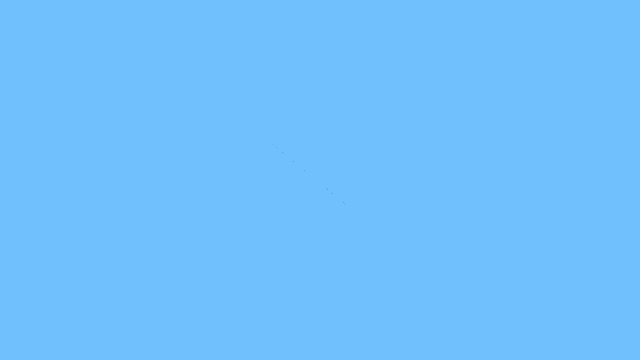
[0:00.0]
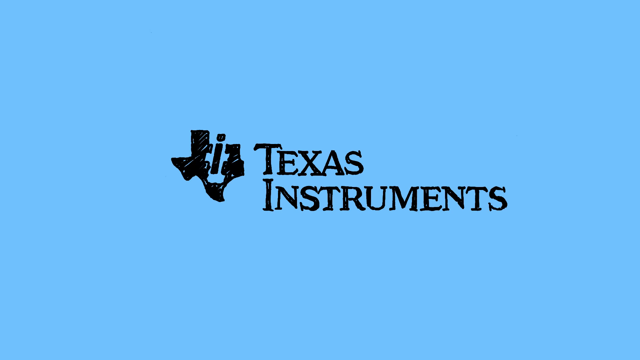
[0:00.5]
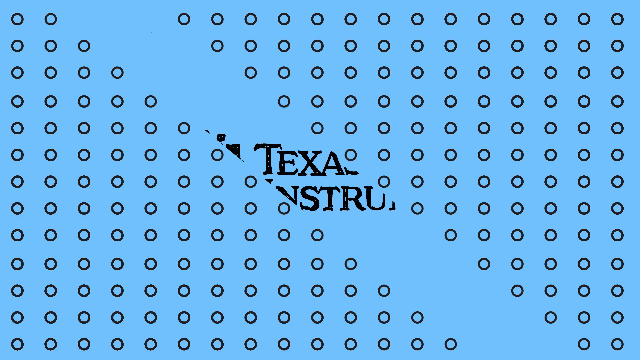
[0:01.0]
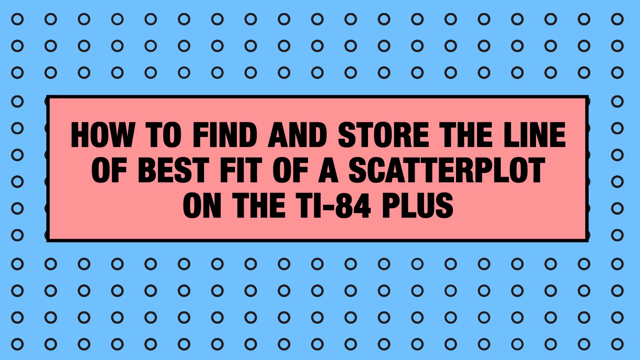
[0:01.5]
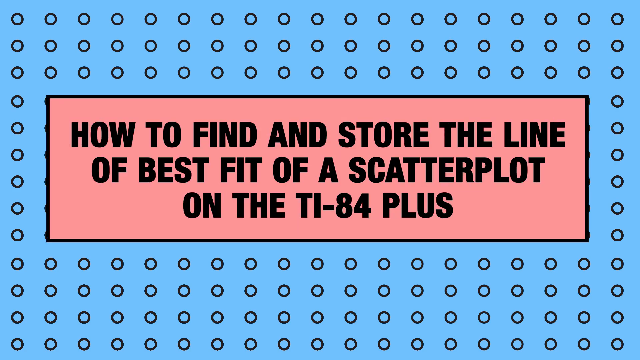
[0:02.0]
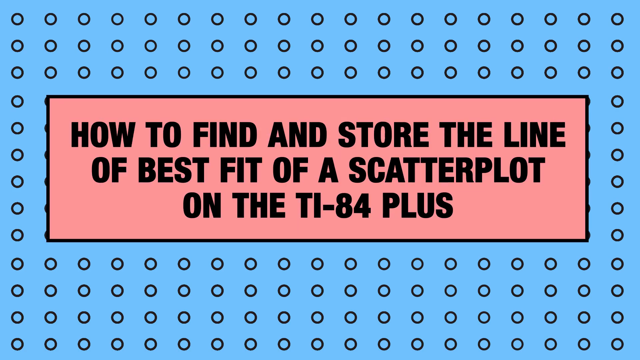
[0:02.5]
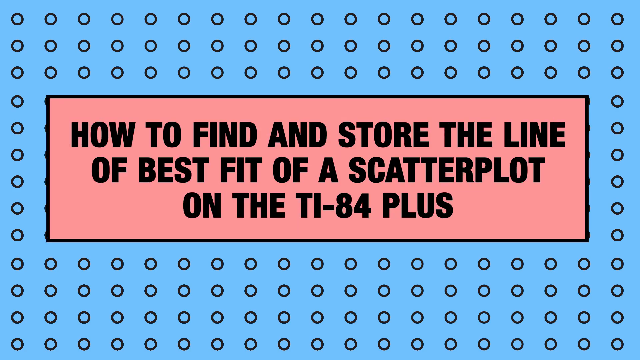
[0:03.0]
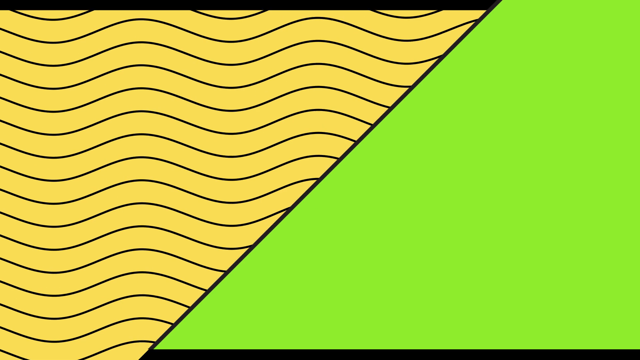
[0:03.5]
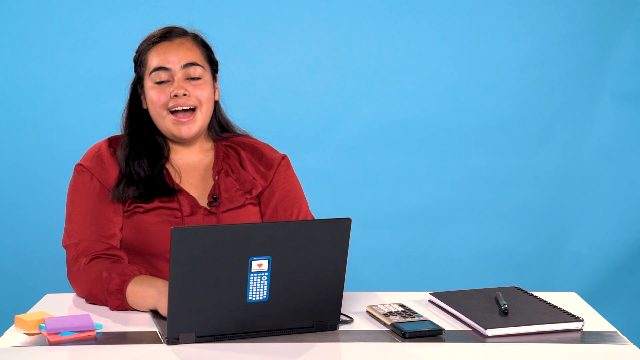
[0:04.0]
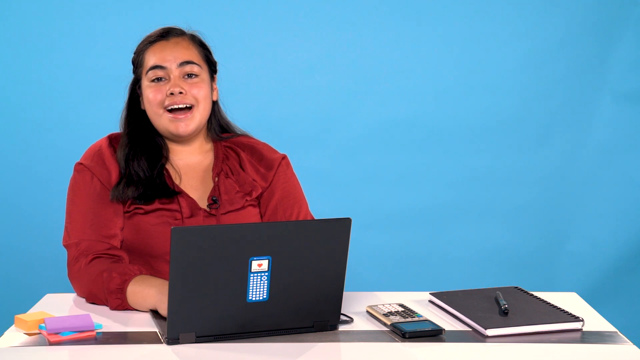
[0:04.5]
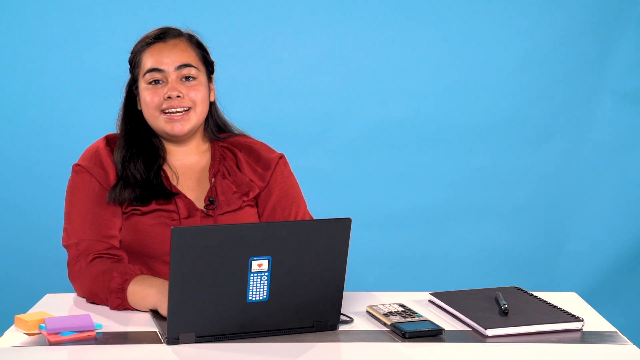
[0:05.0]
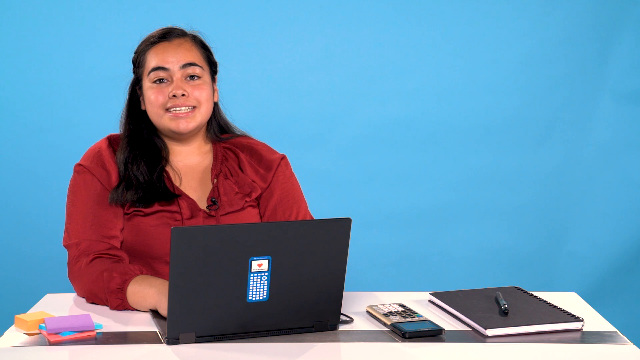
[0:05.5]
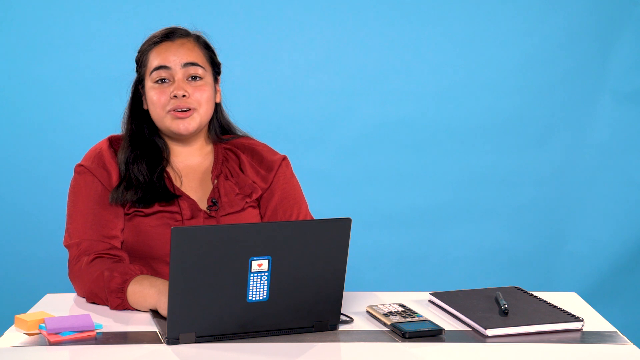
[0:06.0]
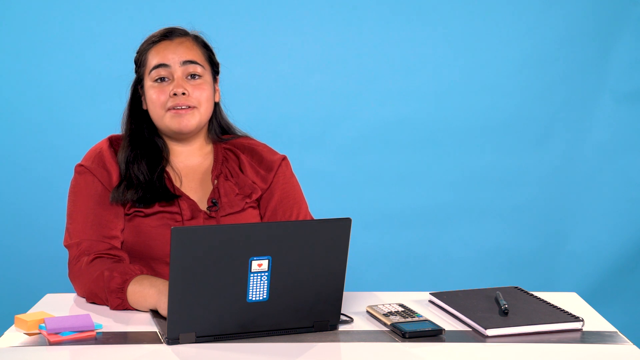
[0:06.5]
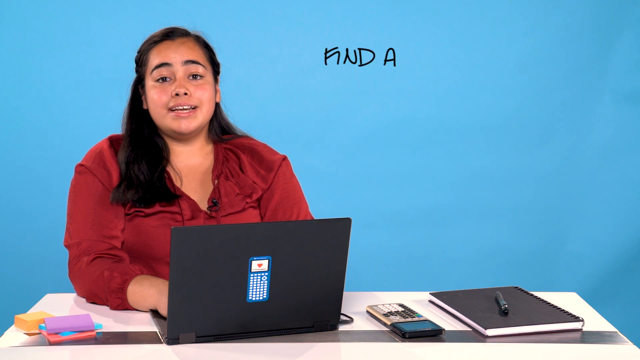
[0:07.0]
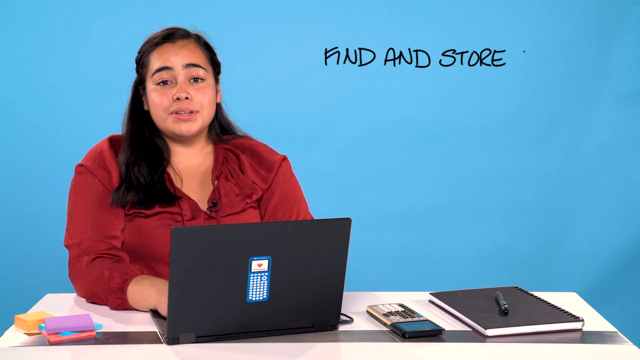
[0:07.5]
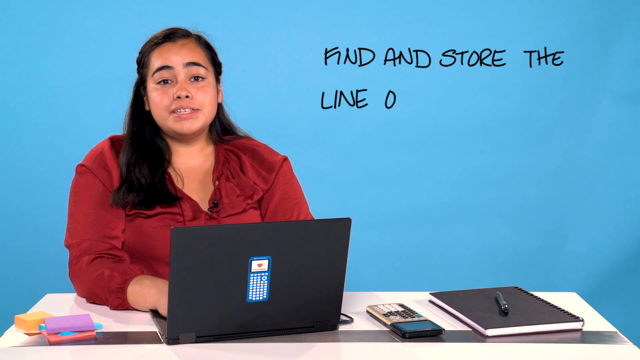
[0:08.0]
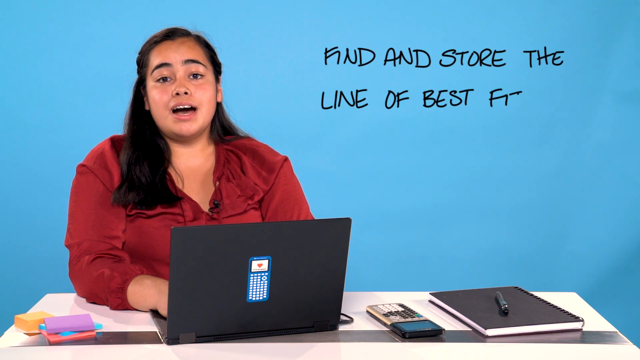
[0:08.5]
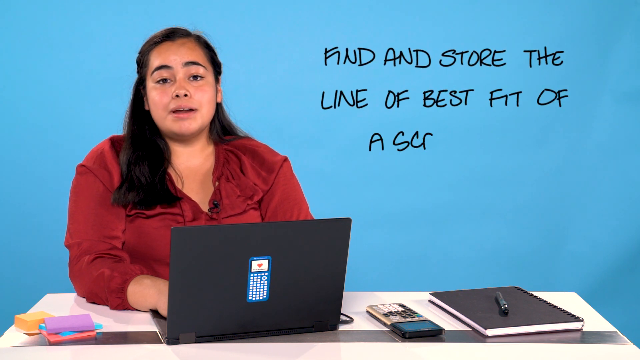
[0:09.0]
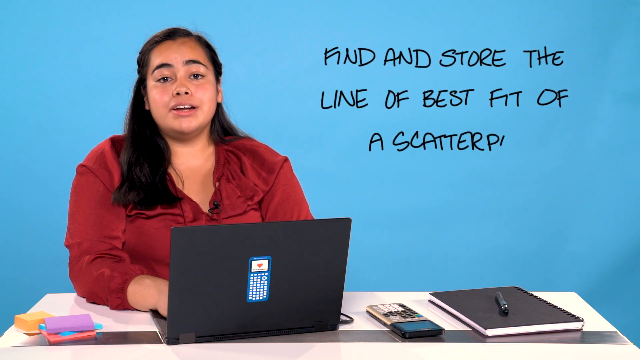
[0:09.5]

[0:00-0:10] On-screen text reads "Texas Instruments," and the next page is titled "how to find and store the line of the best fit of a scatterplot on the TI-84+." A woman is shown explaining, with a laptop in front of her that has a sticker of a calculator on it. There are books and a calculator on the desk, with a pen on top of the book. She seems to be writing, and steps for finding the scatterplot are written out. The woman is smiling and wears a maroon dress, with a small mic on her maroon shirt.